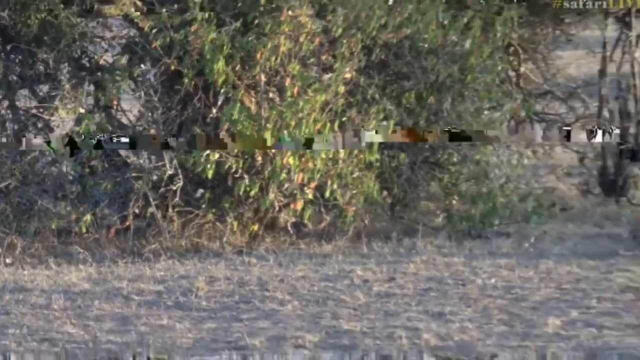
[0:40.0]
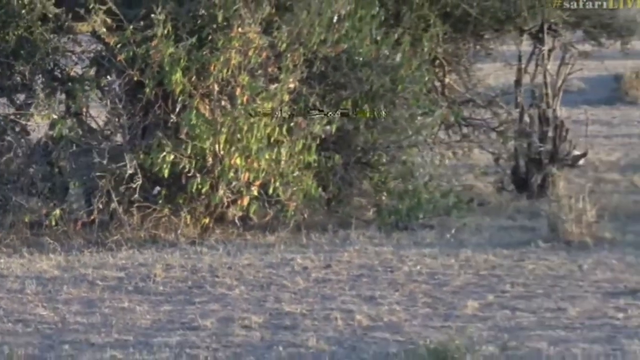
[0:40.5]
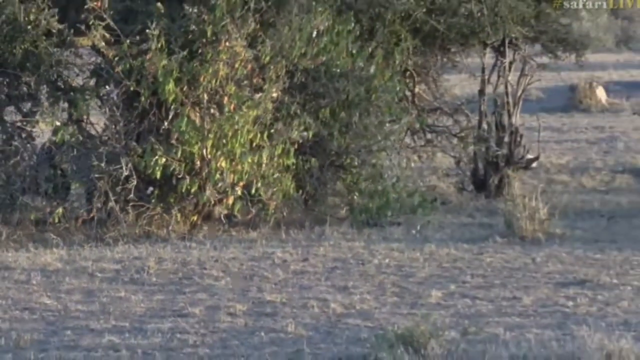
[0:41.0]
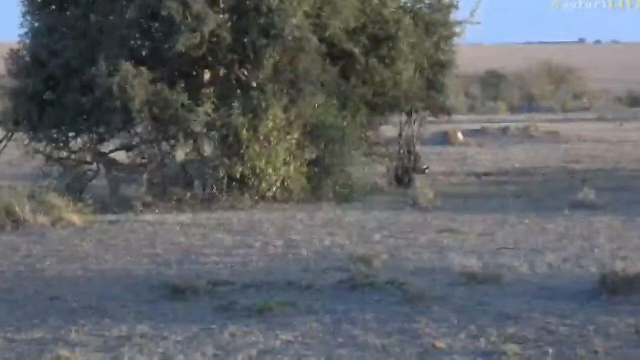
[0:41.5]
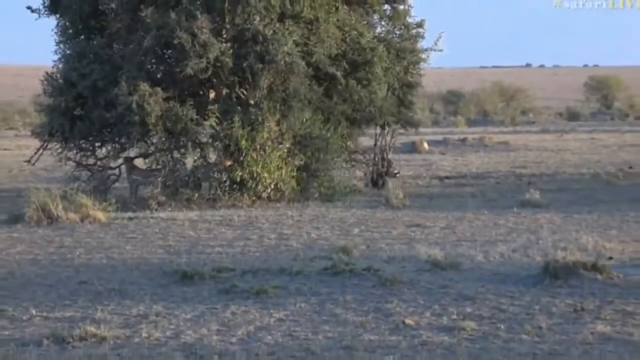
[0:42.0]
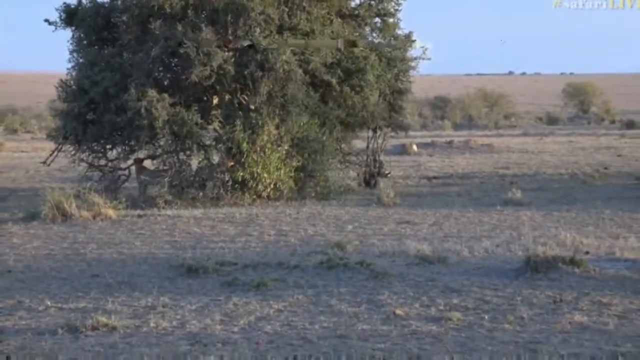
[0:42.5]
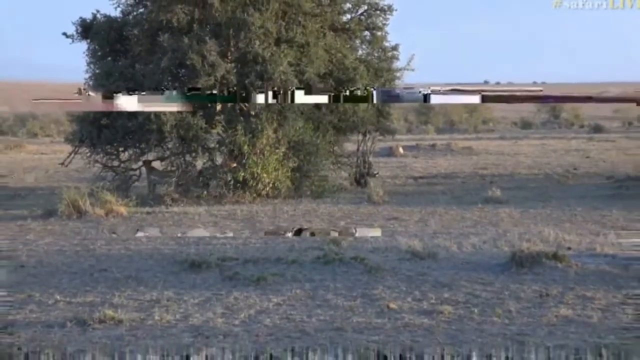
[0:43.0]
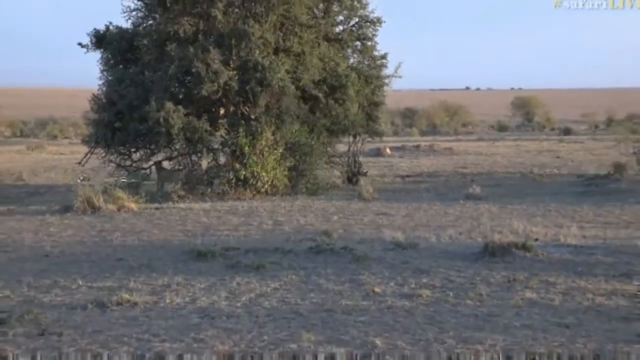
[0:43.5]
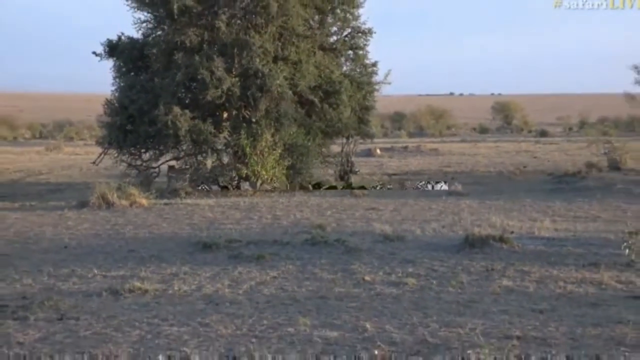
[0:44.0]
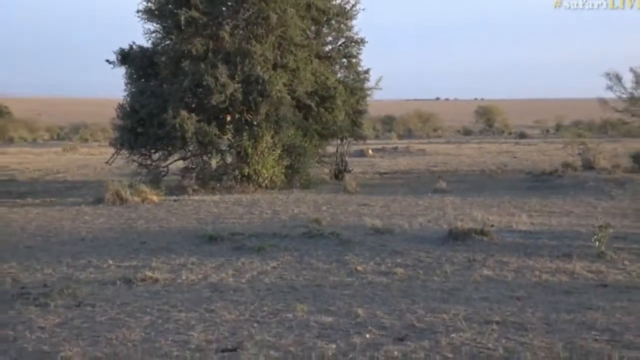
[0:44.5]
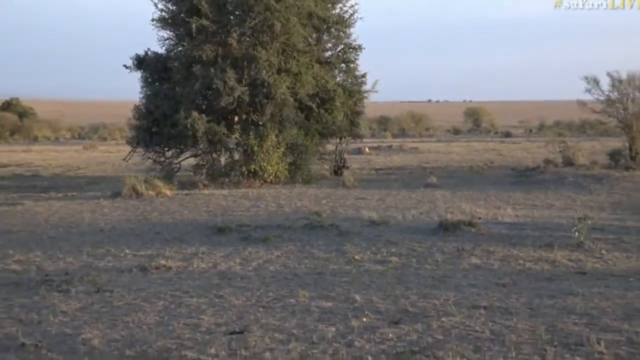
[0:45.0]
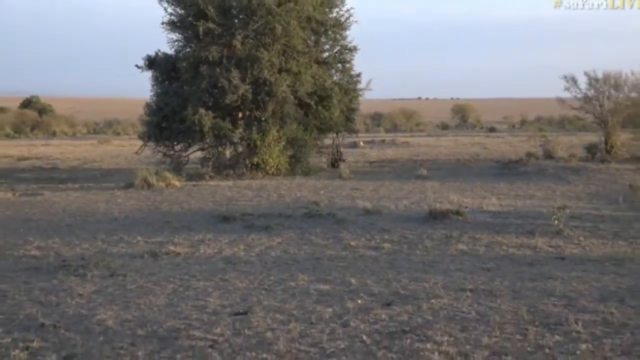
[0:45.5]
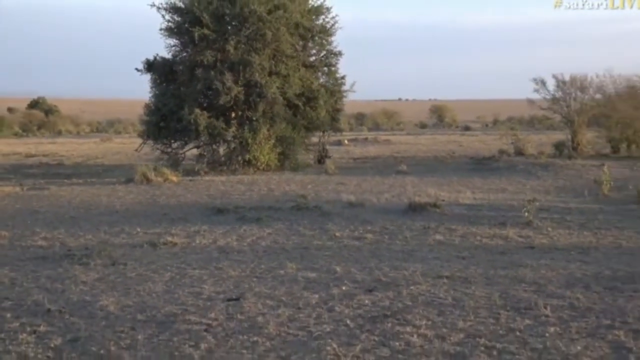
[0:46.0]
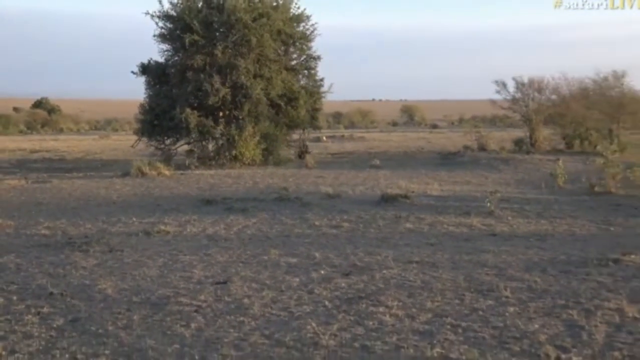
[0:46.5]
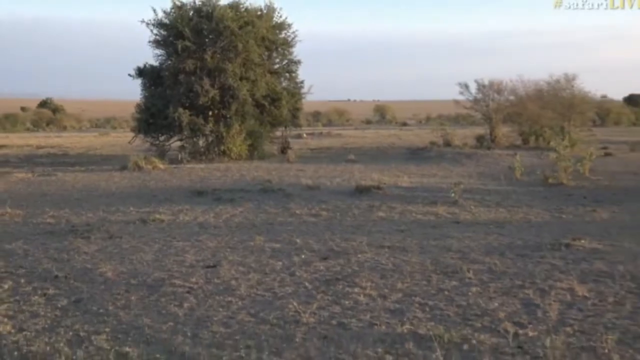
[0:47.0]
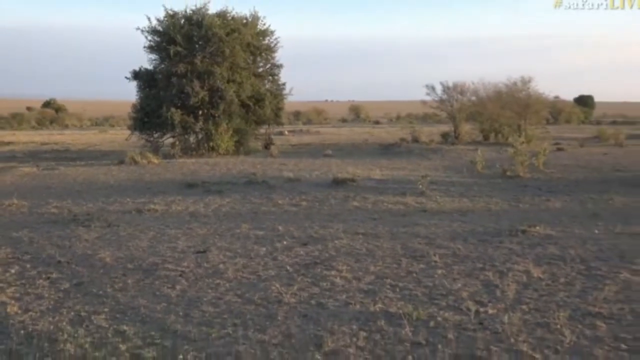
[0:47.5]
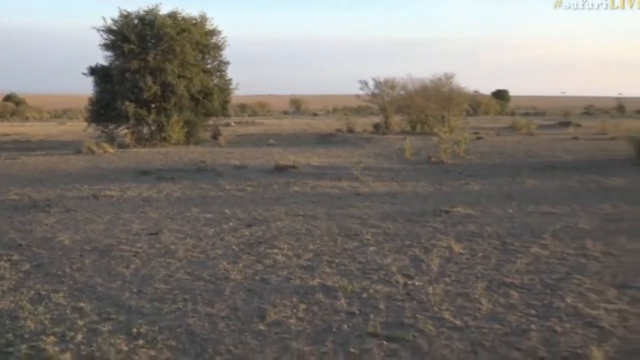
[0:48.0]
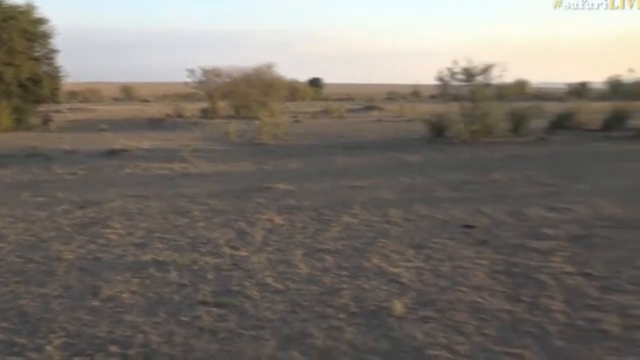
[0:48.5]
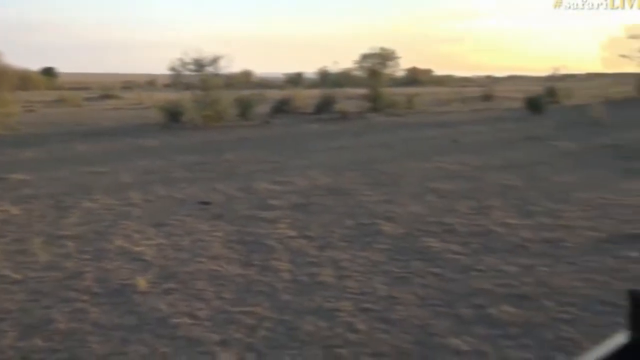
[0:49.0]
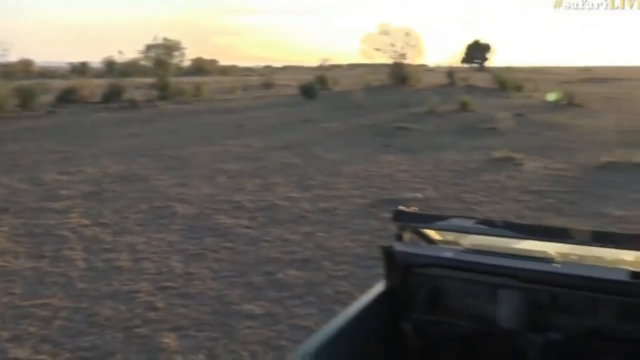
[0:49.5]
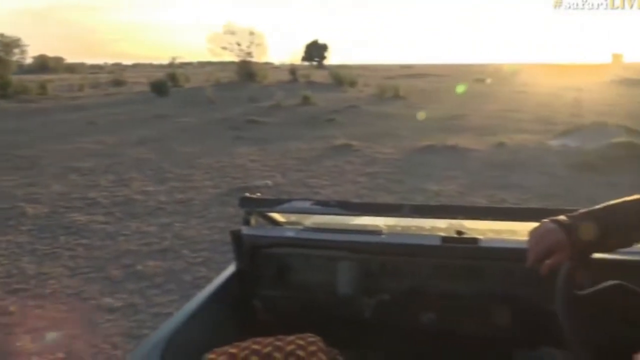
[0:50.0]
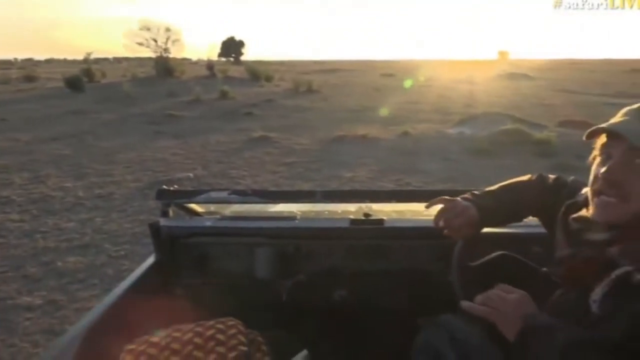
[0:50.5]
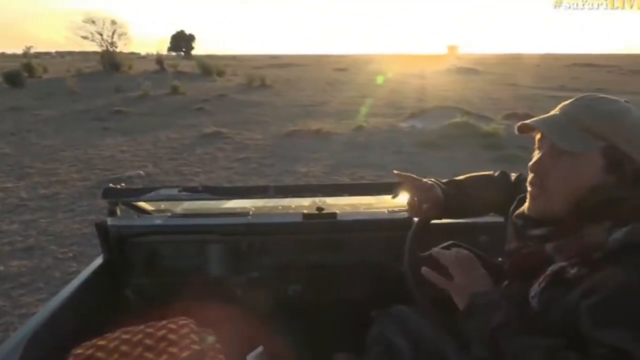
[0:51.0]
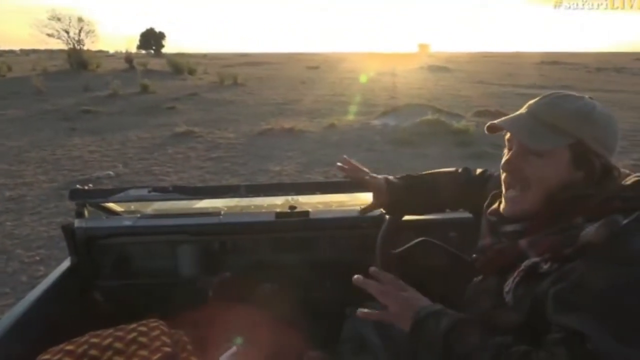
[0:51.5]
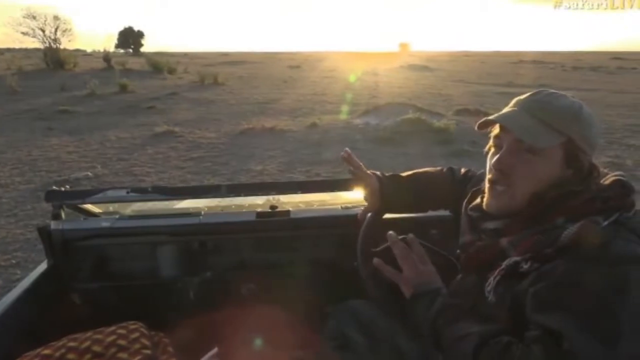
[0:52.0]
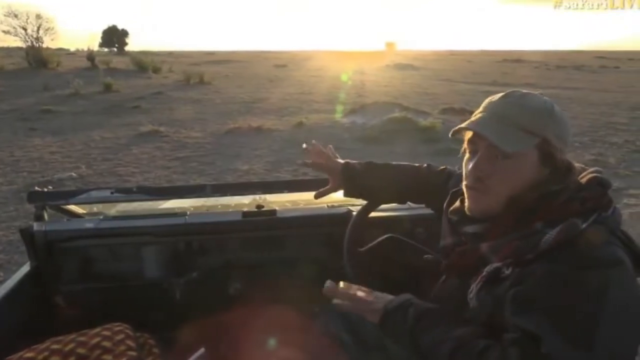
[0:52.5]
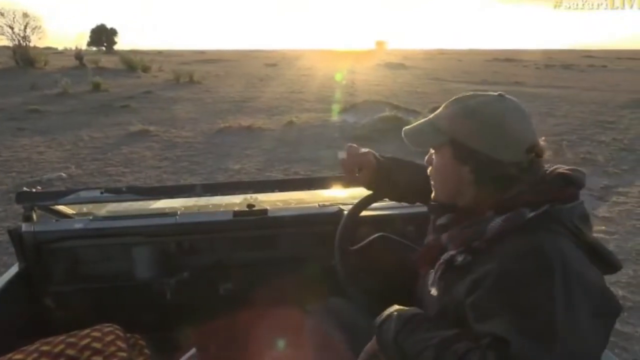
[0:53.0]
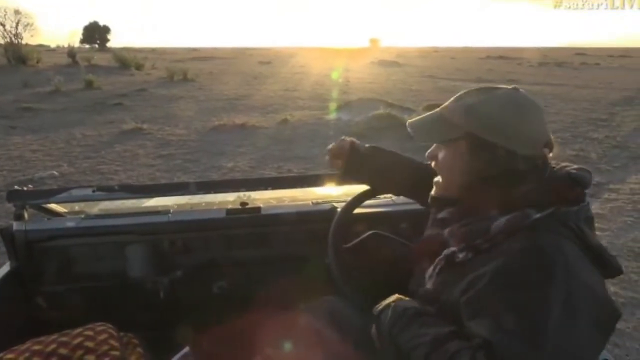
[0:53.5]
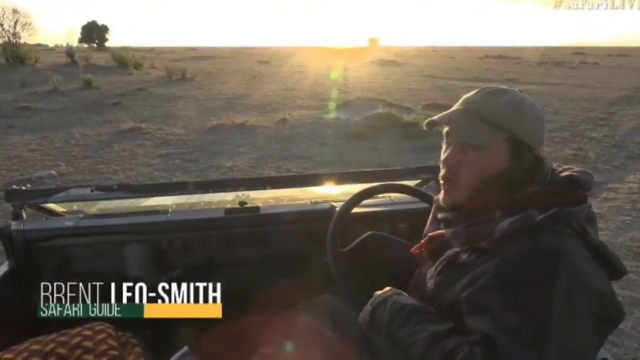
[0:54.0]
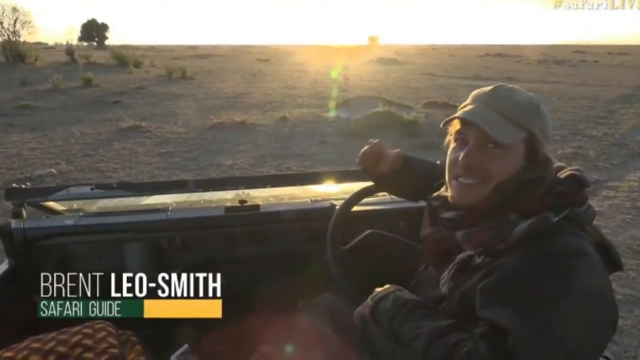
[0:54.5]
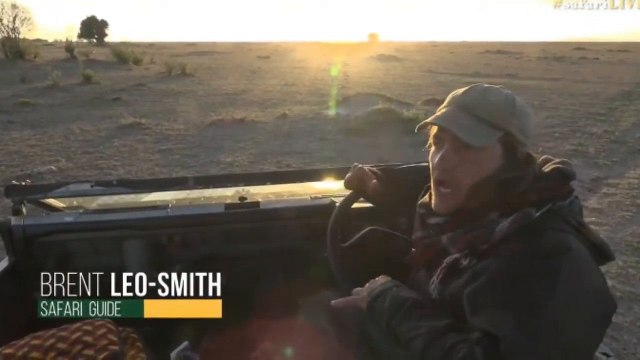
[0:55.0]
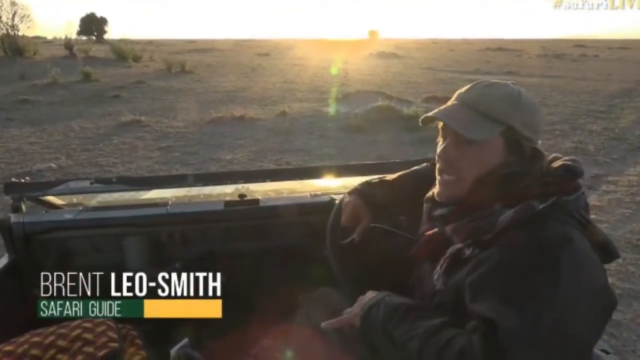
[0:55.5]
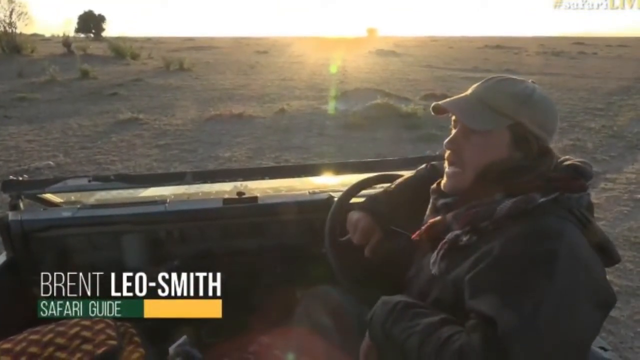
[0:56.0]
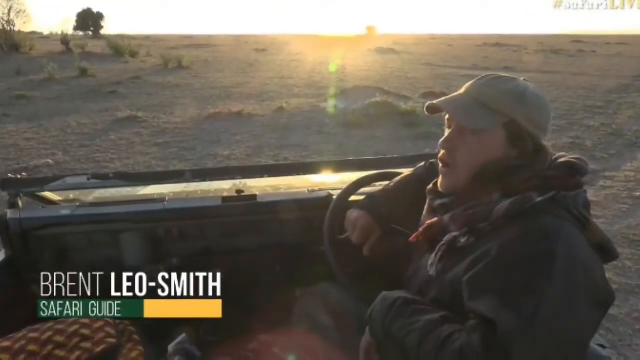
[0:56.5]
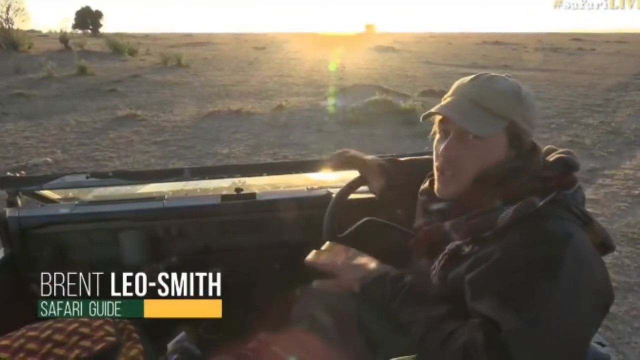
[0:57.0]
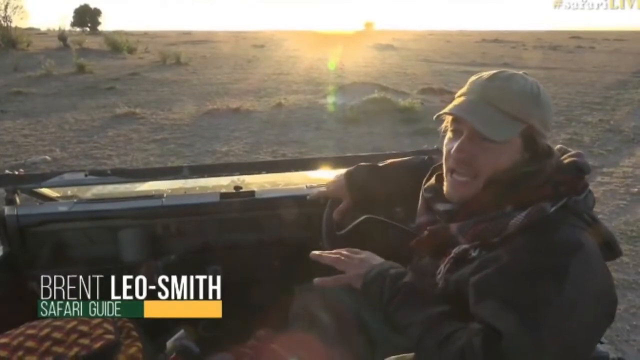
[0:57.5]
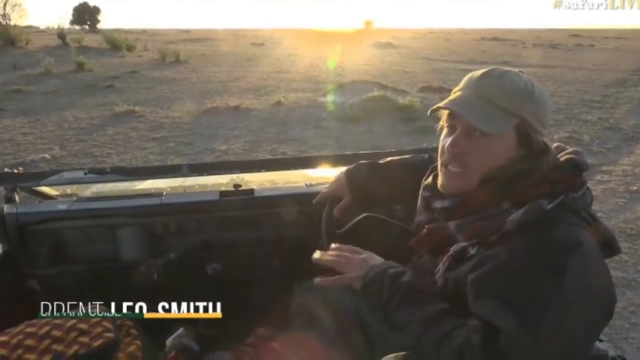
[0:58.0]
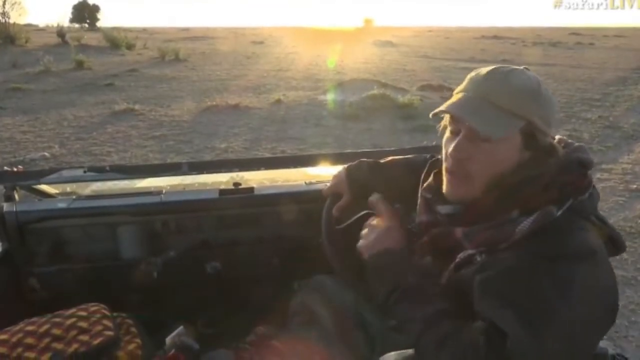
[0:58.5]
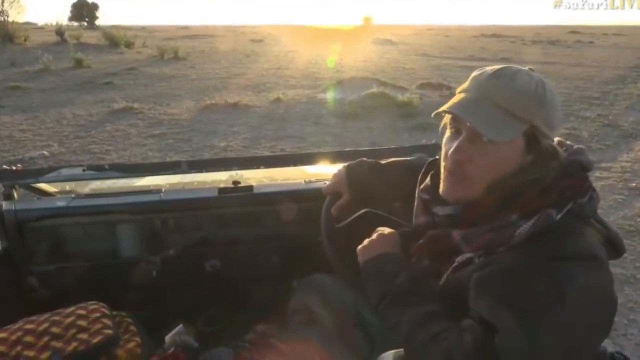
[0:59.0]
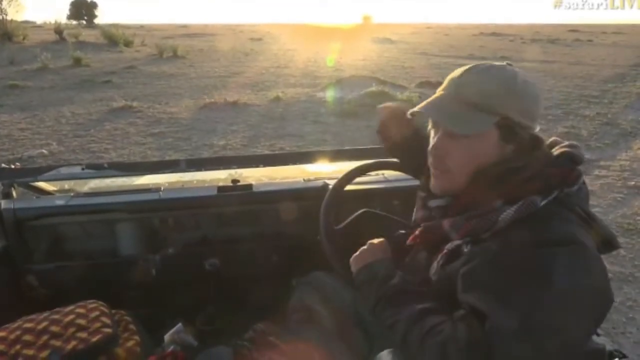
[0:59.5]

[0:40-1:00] The camera zooms out from the area, revealing a small bush inside which the group of cheetahs seems to be relaxing, apparently just after a meal, in the shade inside the bush. The camera zooms out further to show the entire field, with different bushes in the distance and a group of animals far away. The view then returns to a man named Brendan Leoff Smith, who is on a jeep. He seems to be explaining the situation, using hand gestures, as the camera focuses on him and his expression.